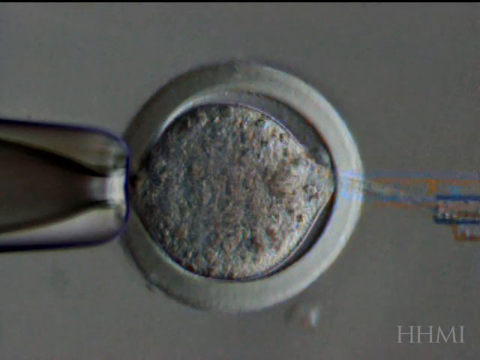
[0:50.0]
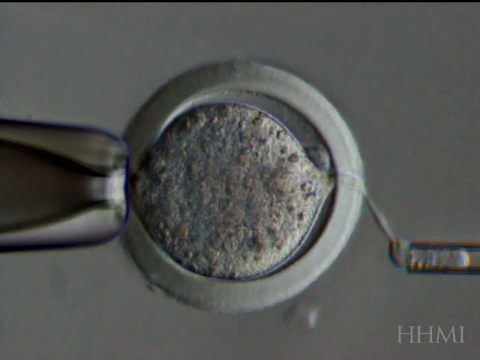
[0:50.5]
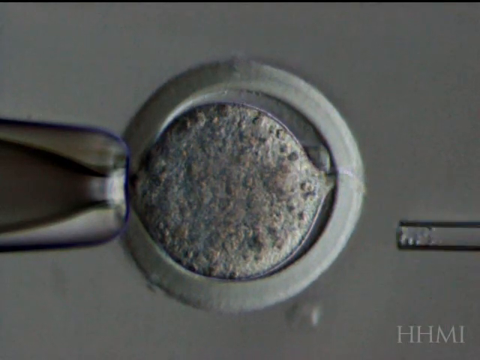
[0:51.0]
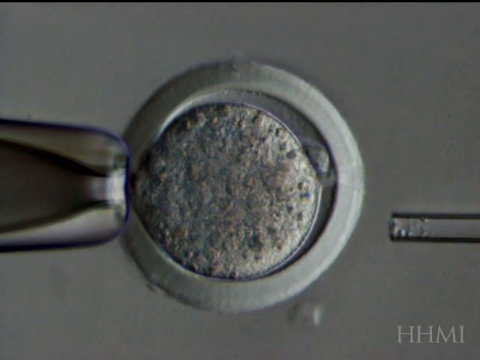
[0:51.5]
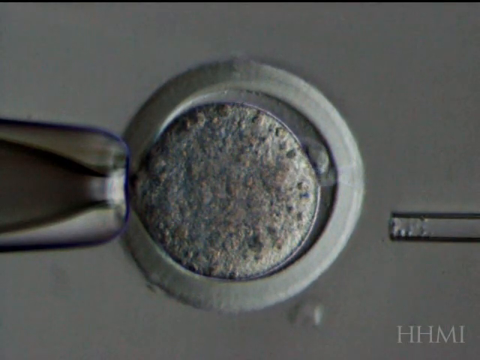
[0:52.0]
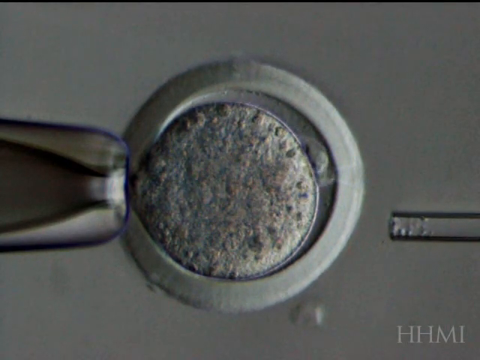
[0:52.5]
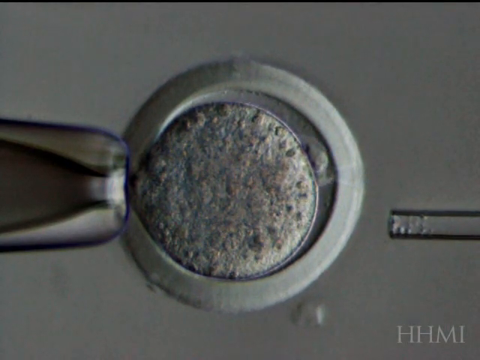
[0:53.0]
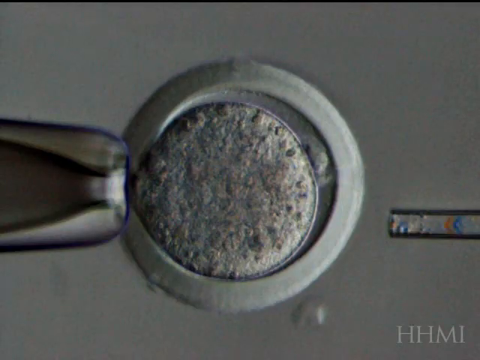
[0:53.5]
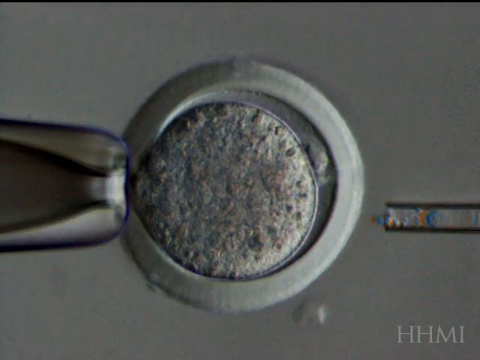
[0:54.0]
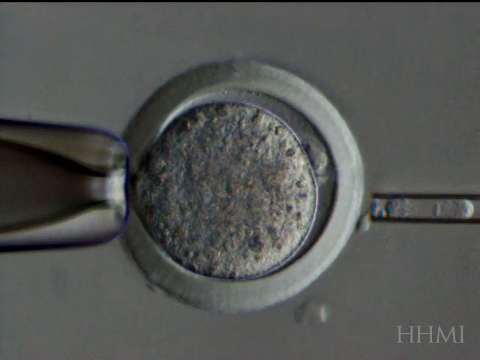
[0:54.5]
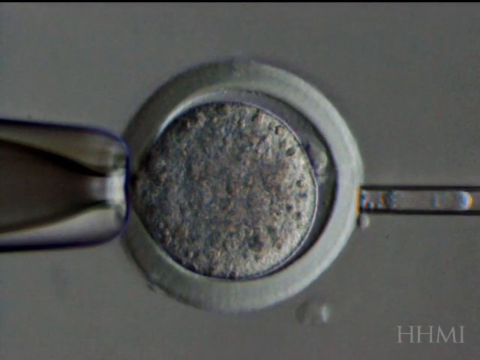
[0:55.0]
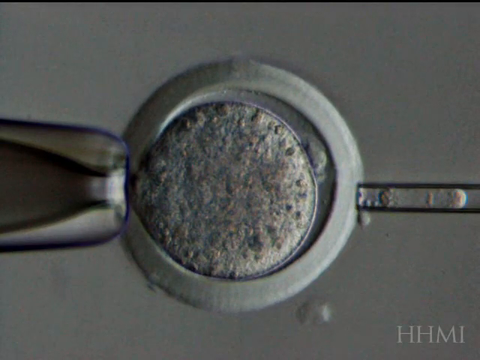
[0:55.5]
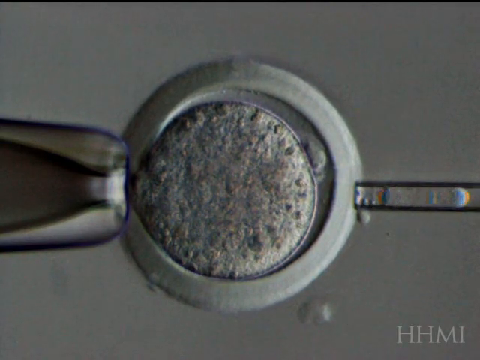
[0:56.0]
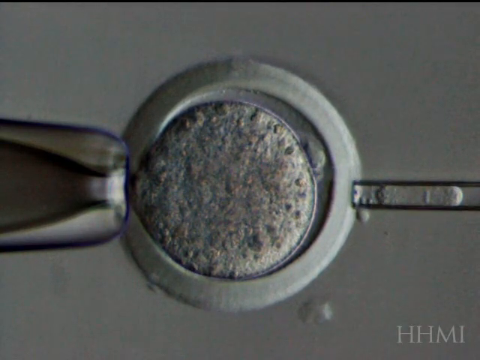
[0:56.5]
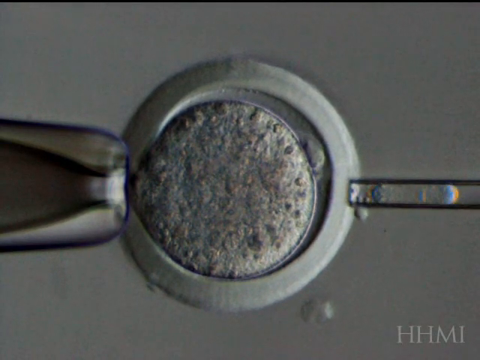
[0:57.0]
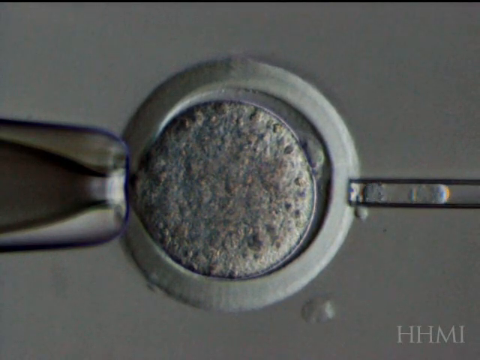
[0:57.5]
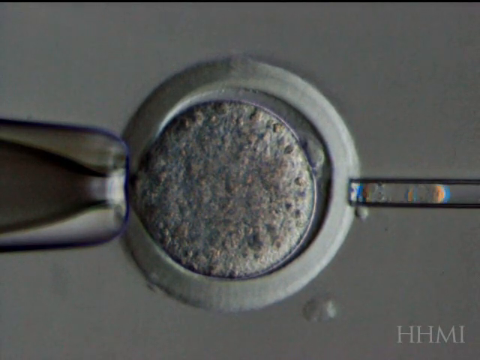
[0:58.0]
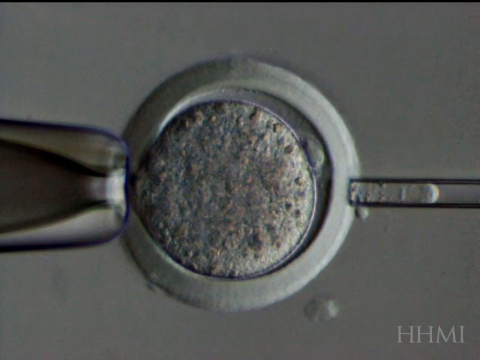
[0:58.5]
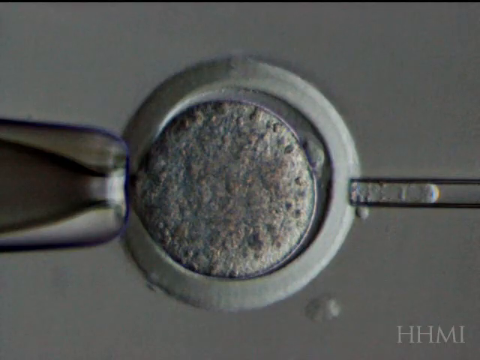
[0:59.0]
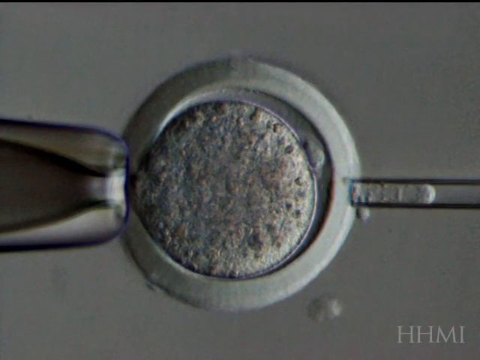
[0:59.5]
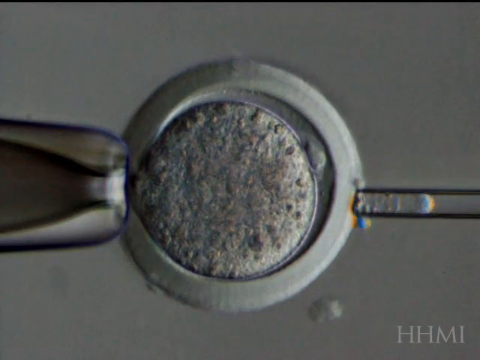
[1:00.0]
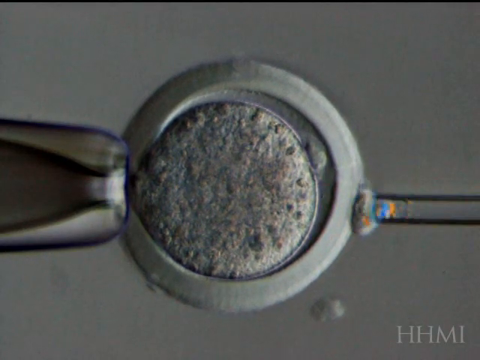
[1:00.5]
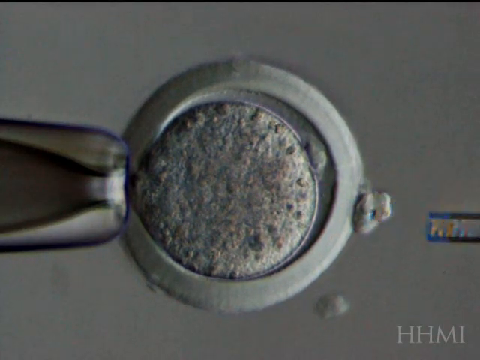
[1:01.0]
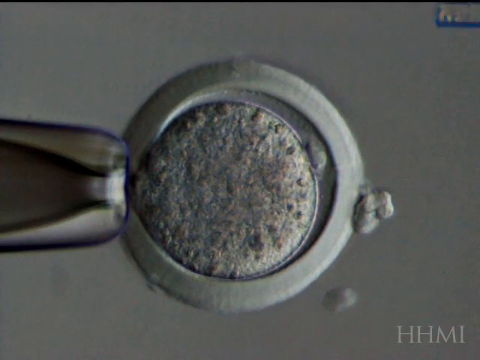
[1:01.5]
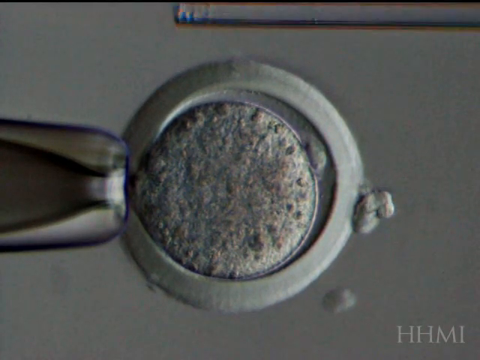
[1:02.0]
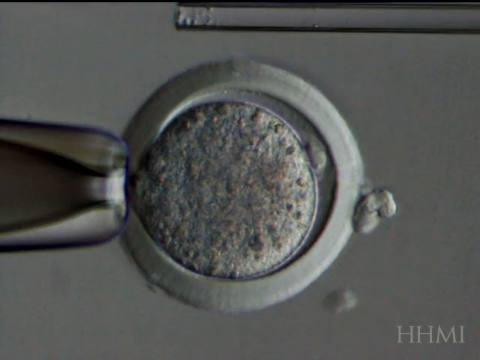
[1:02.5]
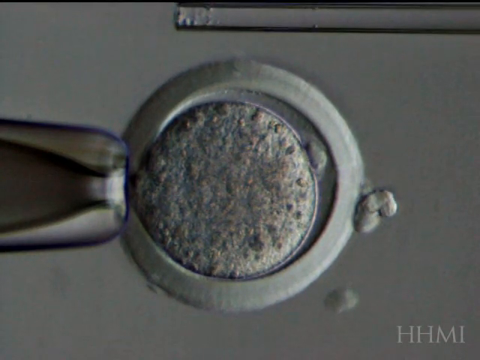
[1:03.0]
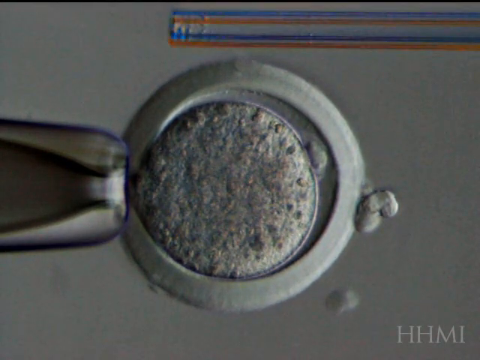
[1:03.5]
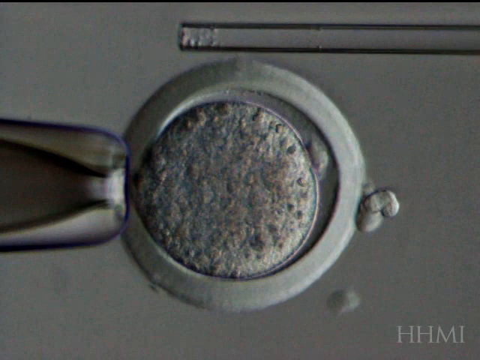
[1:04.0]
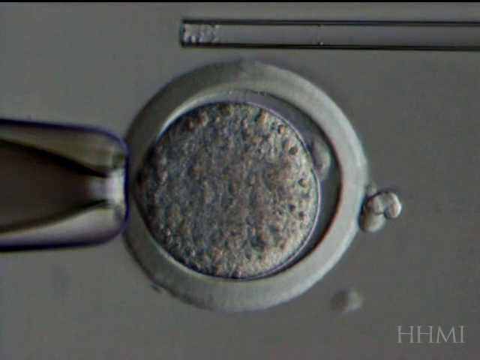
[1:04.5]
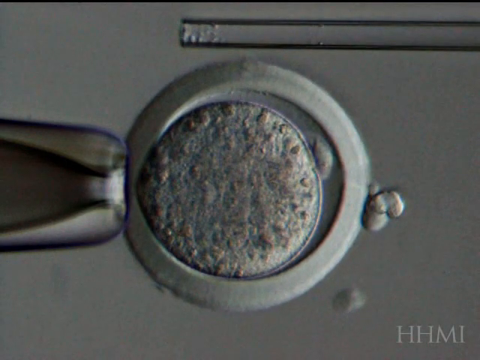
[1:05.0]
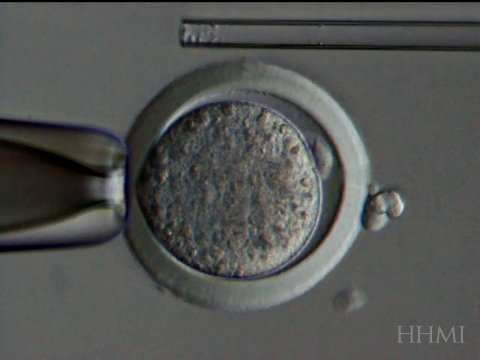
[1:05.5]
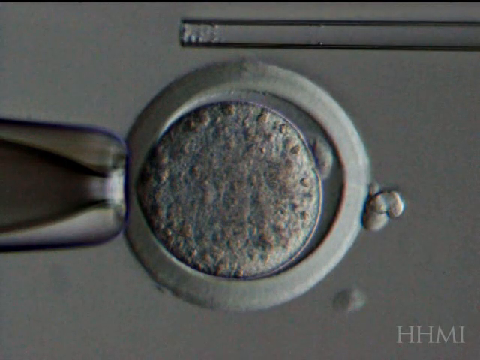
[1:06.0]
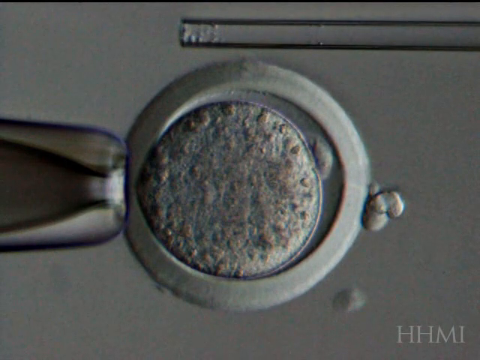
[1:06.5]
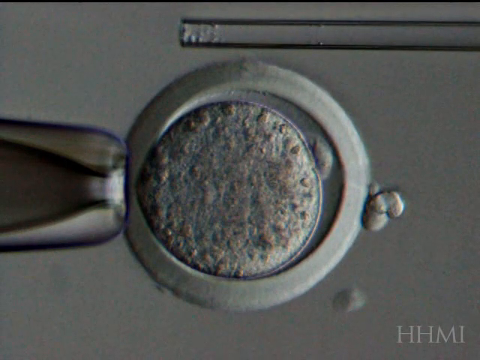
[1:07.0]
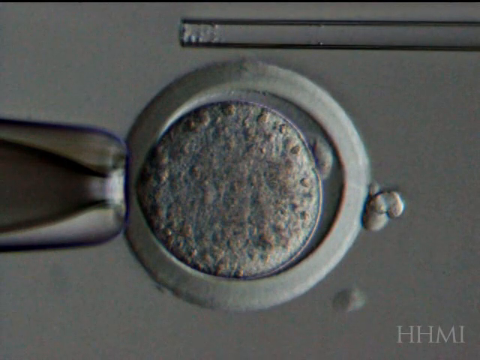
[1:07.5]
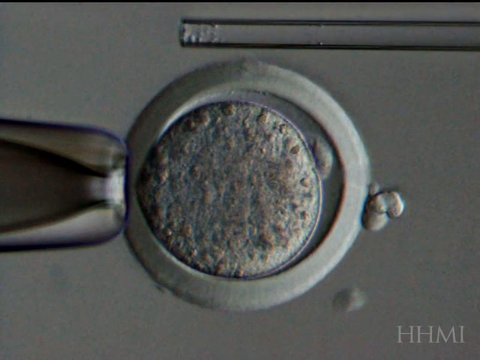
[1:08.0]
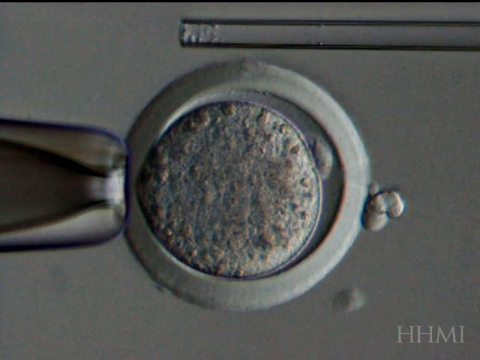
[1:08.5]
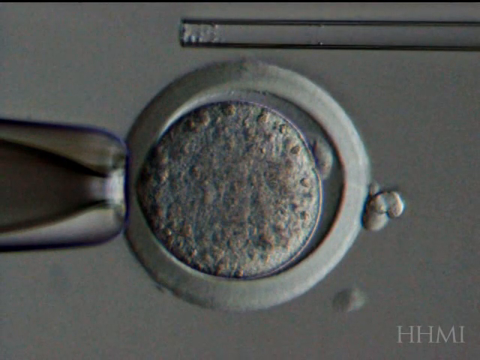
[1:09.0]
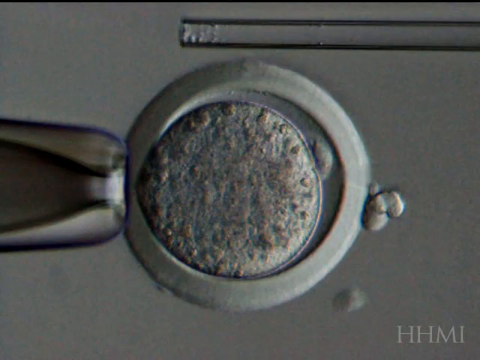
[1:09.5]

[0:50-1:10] The inner membrane of the inner circle is broken, and a small amount of substance has spilled out of it. There are now some bubbles where the glass object pierced through both membranes and collected some of the chalky material from inside the inner membrane. Both seem to push into the outer membrane before some of the chalky, chunky inner material is dispelled. The glass object then moves from the right of the screen to the top and sits there. The material it dispelled is slightly large in volume and looks slightly bubbly as it collects; it looks more like a blob, resembling insulation when it is first poured, almost like memory foam that springs back a little, and it has some weight to it. The glass object is fairly long, now spanning more than half the screen, but extremely thin. The metal tip looks like it is just sitting there pressing against the membranes.